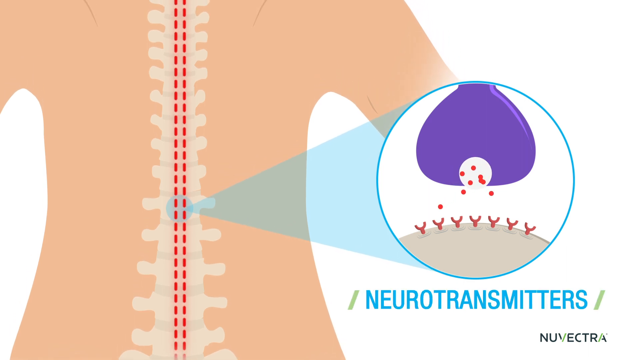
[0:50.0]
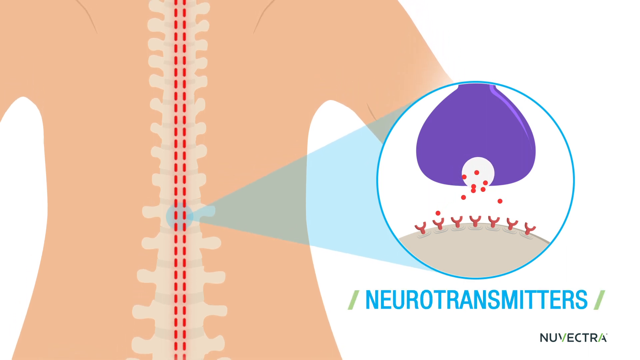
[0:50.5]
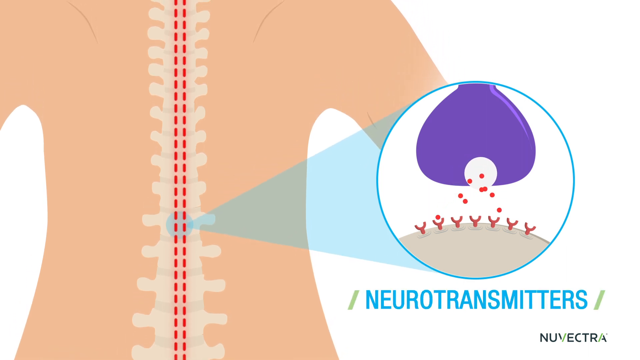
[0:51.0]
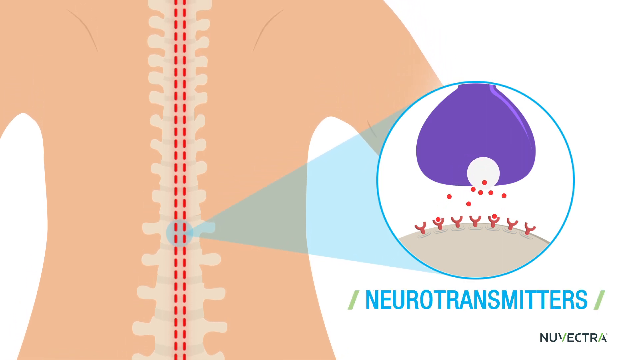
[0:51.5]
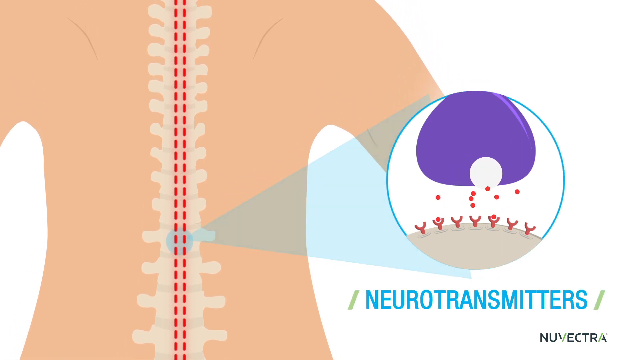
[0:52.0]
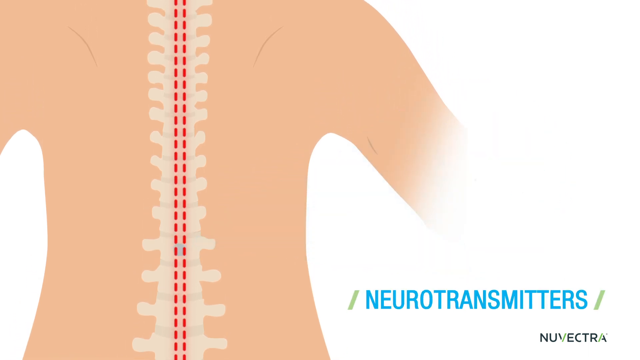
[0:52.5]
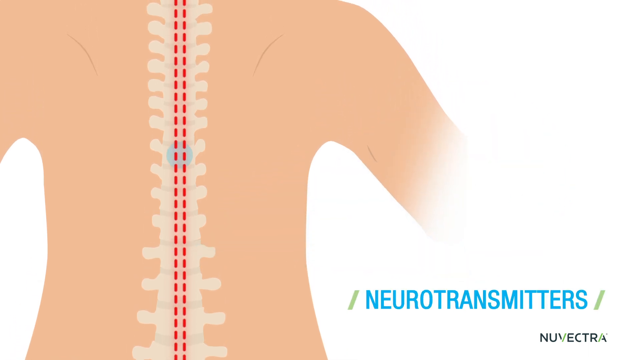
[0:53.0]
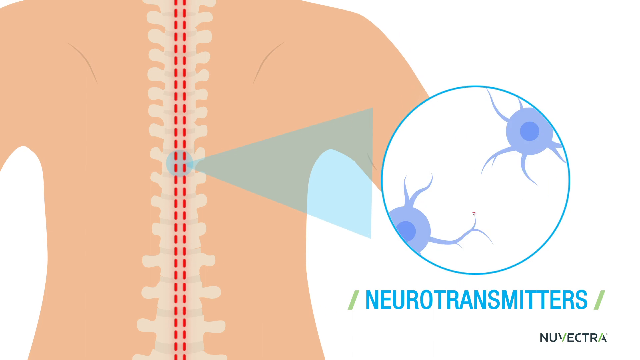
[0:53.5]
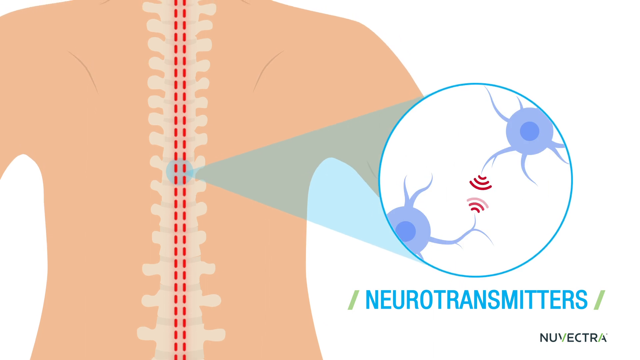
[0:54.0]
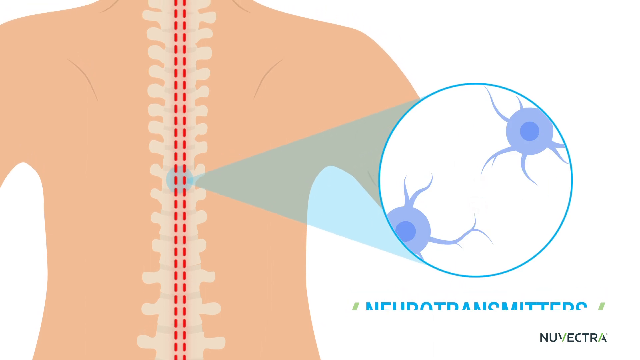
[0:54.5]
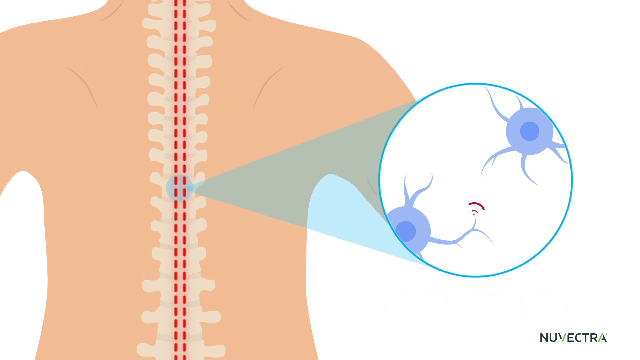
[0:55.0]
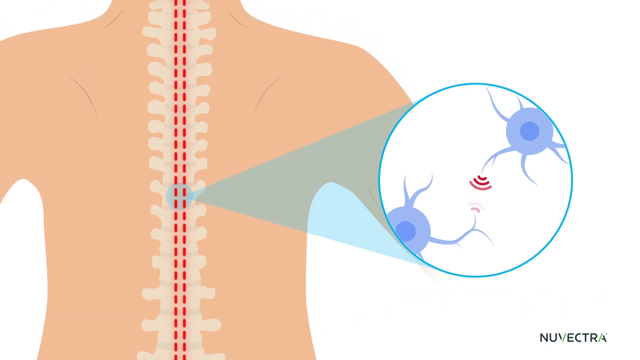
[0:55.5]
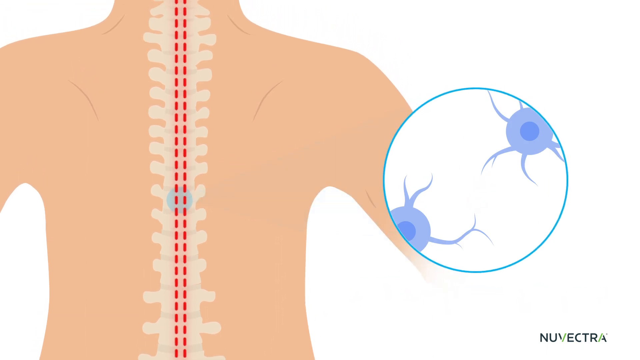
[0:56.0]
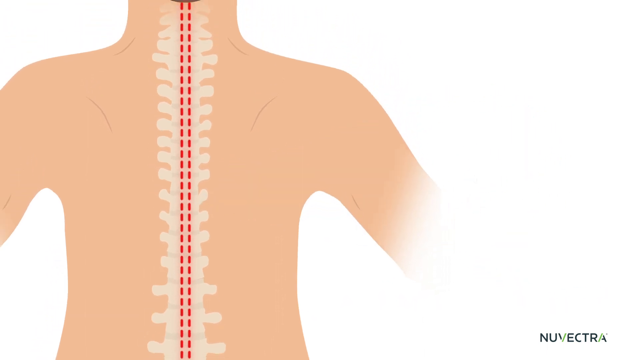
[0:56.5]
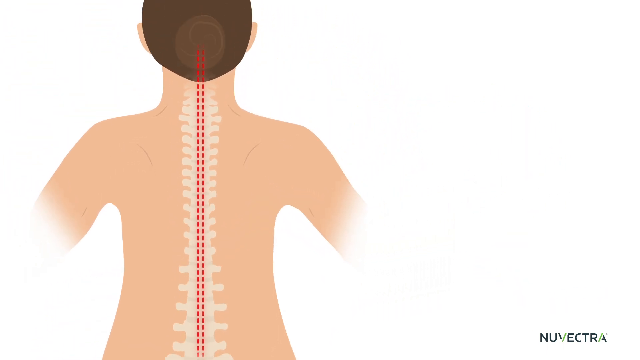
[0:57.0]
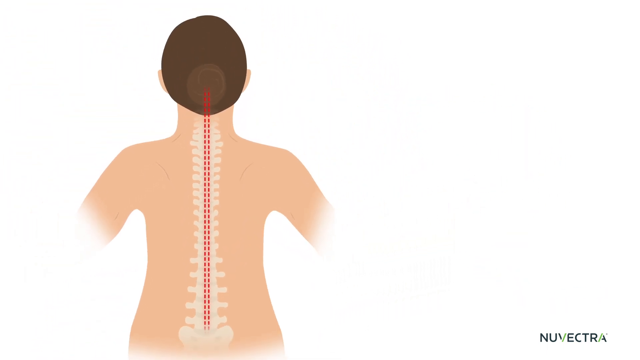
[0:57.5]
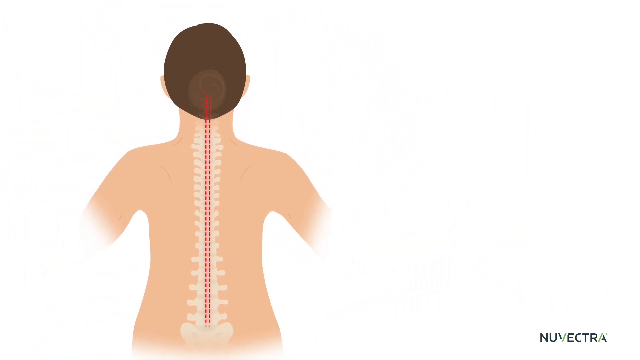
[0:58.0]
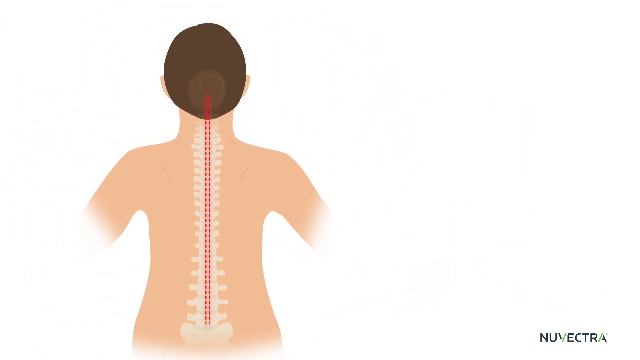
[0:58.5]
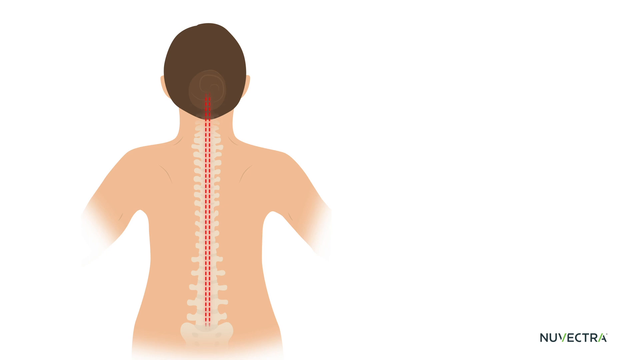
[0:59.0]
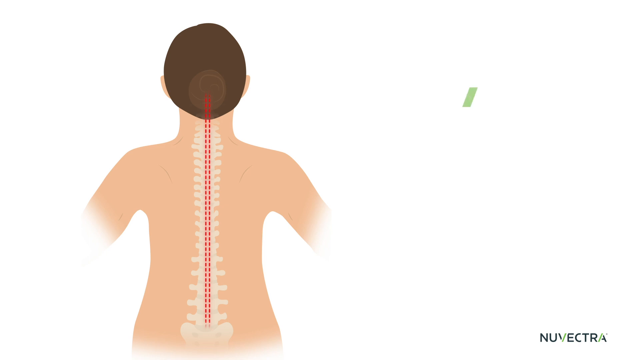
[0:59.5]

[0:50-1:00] The same view of the animated back and spine continues. On the right-hand side, a white circle still shows tiny red circles, the neurotransmitters, traveling toward the bottom. That diagram disappears, and another small blue circle appears on the spine, with a triangular projection of light reaching the right side of the screen. A circle outline then shows two circles with lines coming off them, and red lines show a connection between the two. The camera zooms back out to the full back of the animated person's torso, and blue text on the top right reads "pain message."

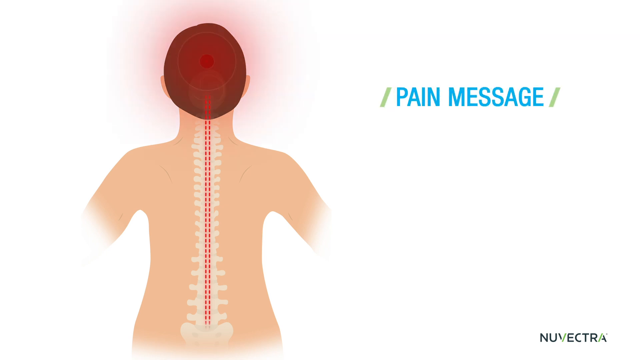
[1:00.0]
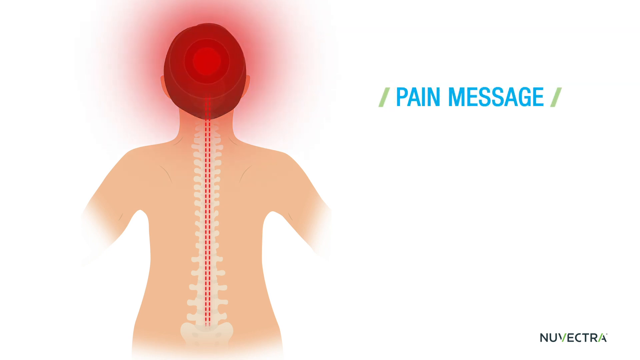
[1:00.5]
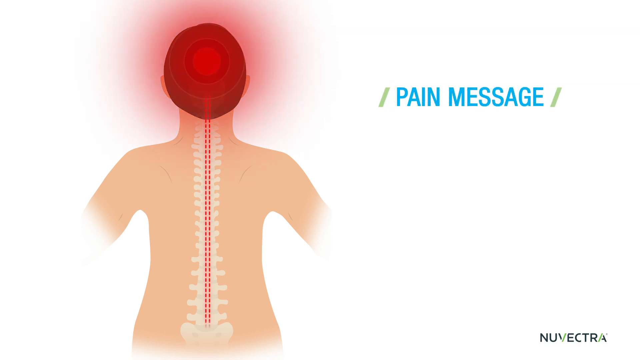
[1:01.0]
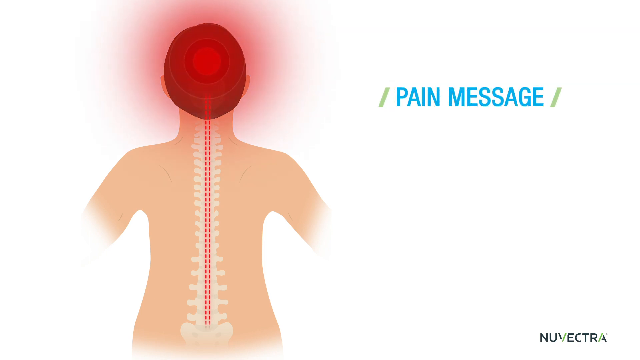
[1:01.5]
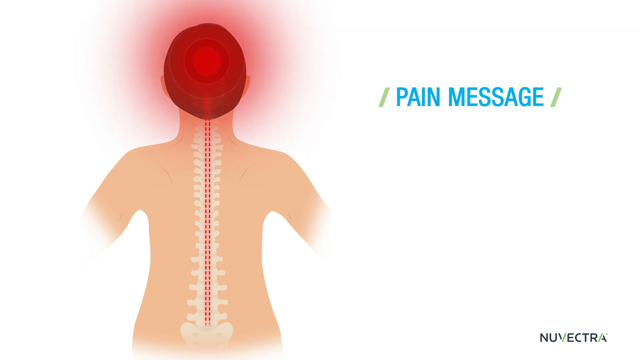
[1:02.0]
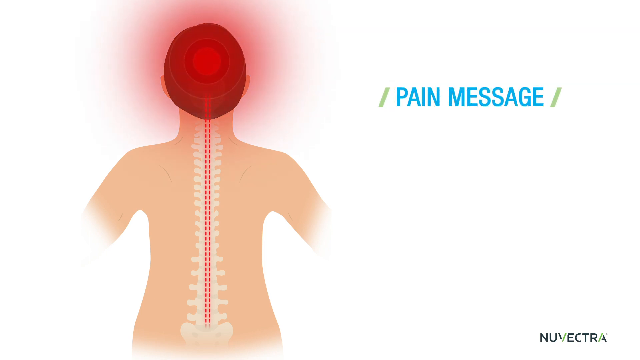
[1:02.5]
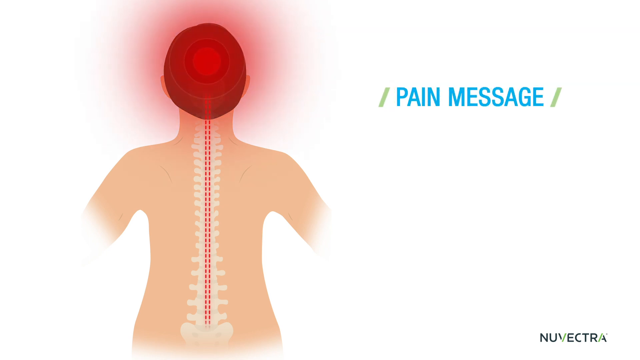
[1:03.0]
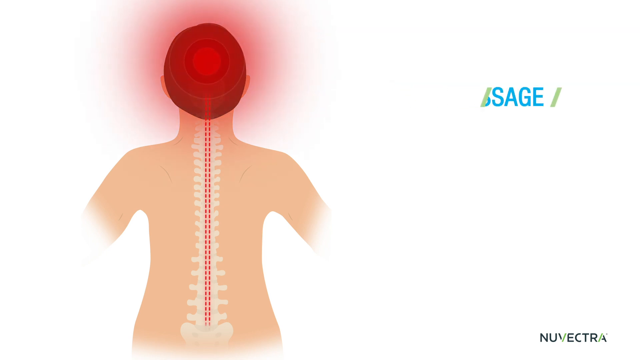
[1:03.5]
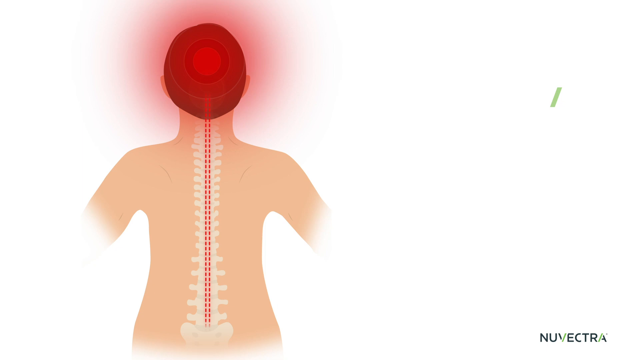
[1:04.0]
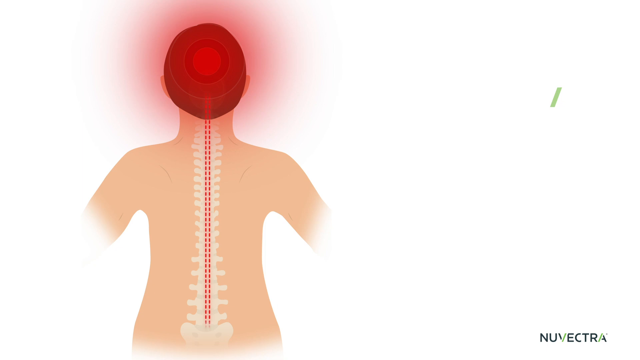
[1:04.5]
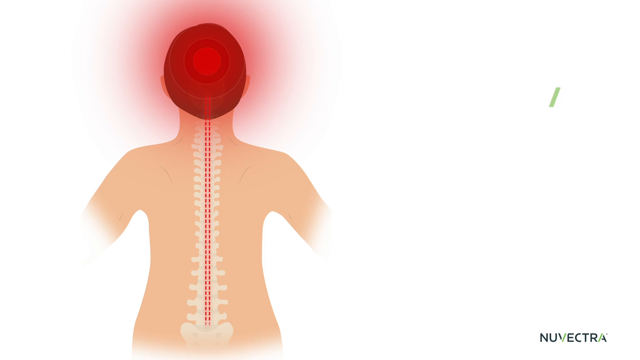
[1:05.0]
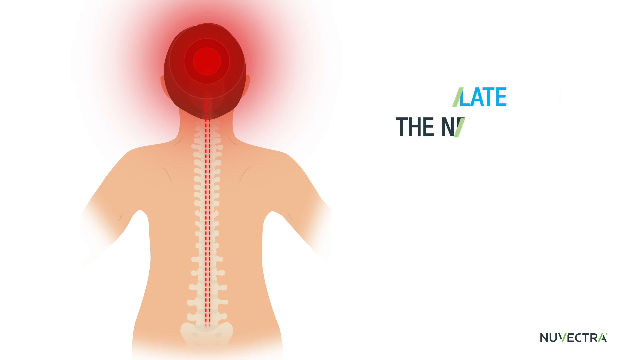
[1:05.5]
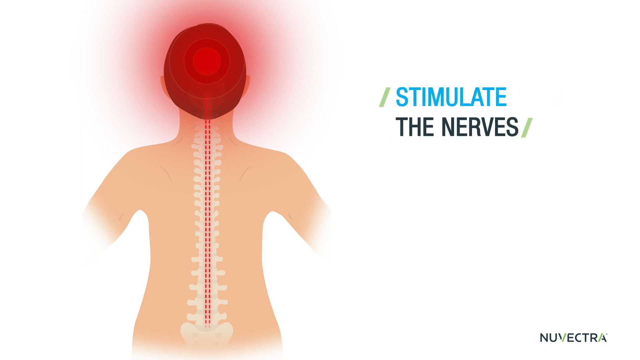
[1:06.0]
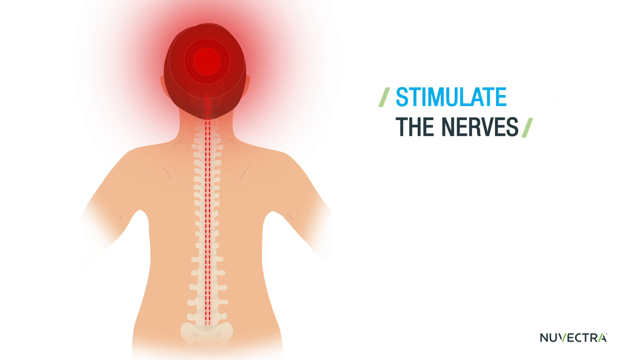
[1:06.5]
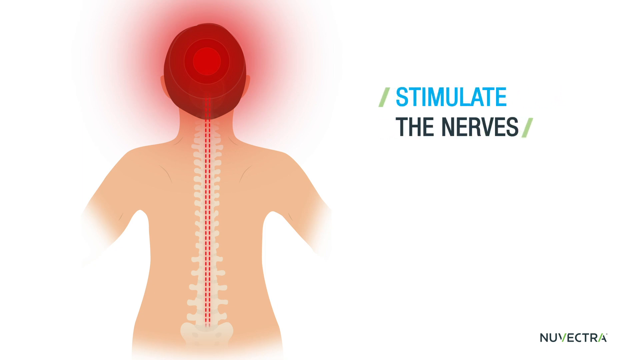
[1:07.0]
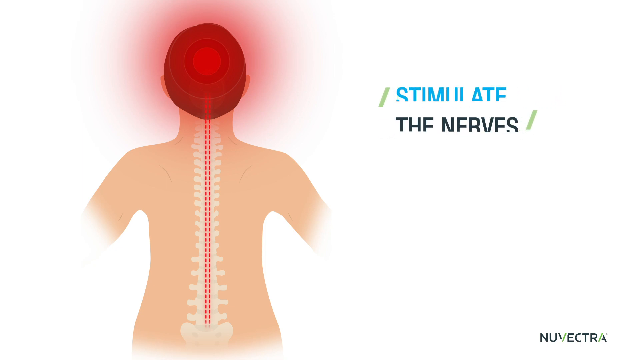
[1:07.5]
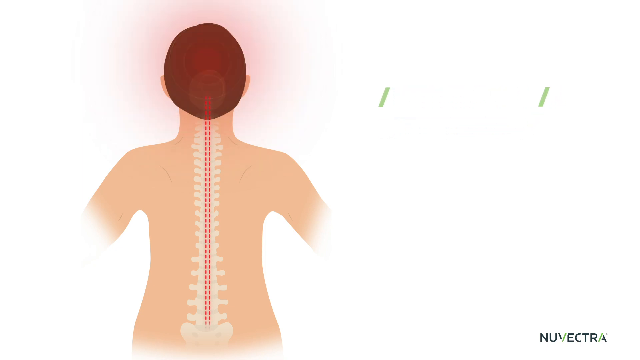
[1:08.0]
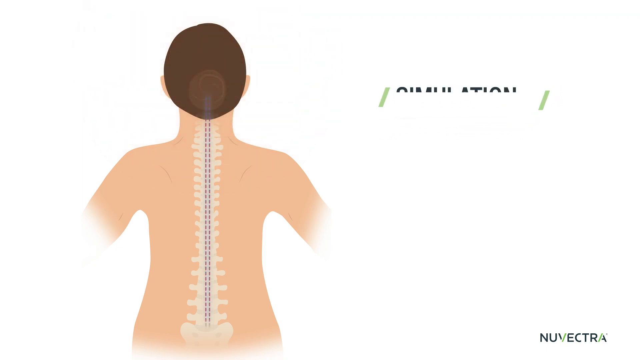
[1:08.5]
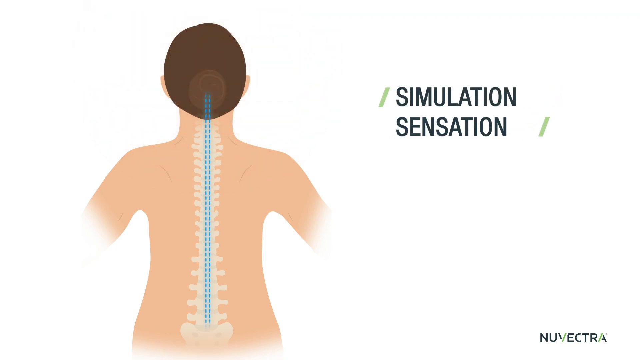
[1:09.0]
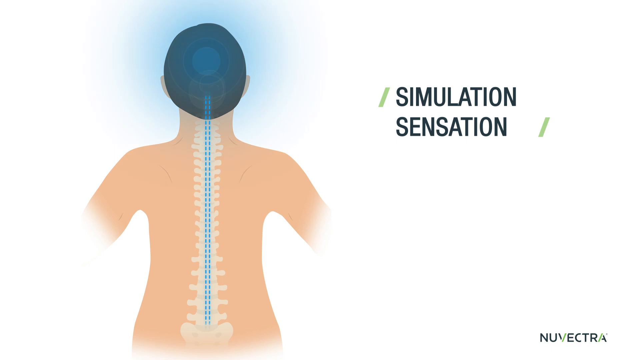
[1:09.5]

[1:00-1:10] A red circle blinks on the back of the animated diagram's head, and the red dotted lines along the spine keep traveling up to the top. The text on the right-hand side first reads "pain message," then new text reads "stimulate" in blue with "the nerves" in black text below it. The red circle and red shaded light are removed from the person's head, and the lines below change from red to blue. On the right-hand side, text then reads "simulation," "sensation," and finally "outsmarts," in blue text.